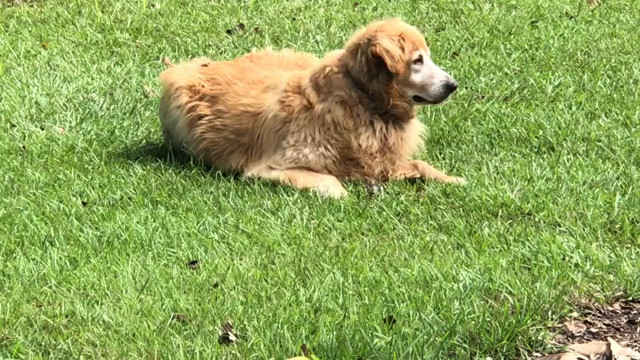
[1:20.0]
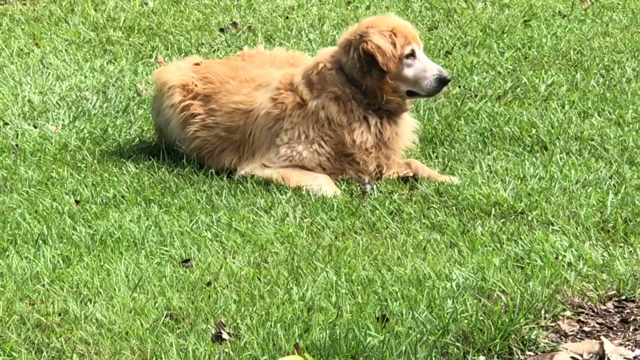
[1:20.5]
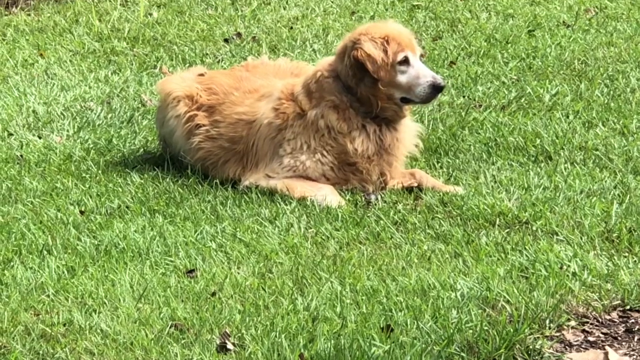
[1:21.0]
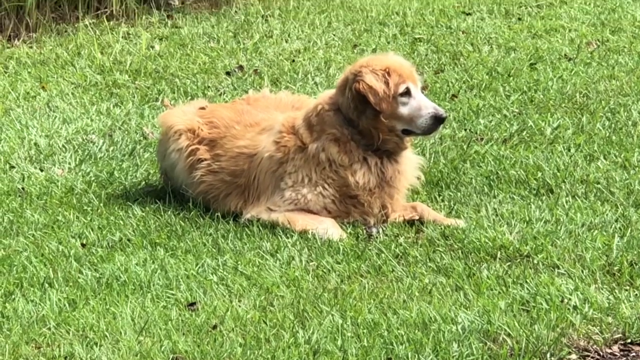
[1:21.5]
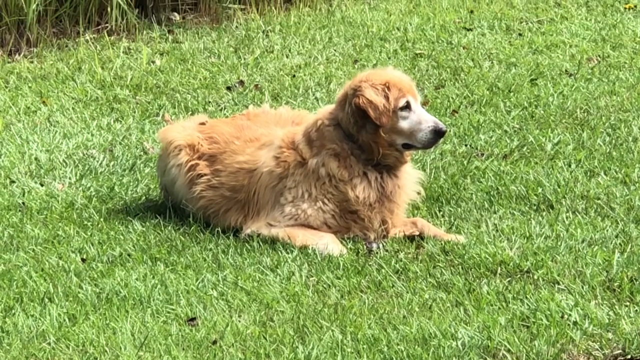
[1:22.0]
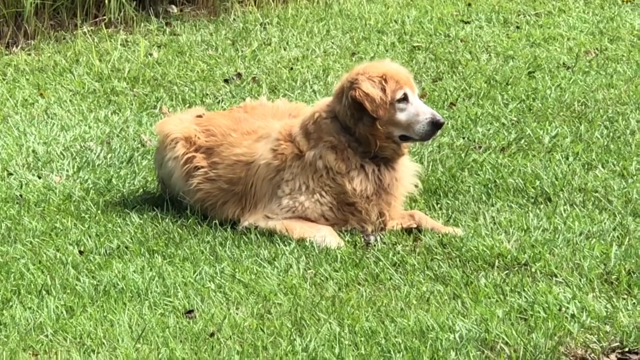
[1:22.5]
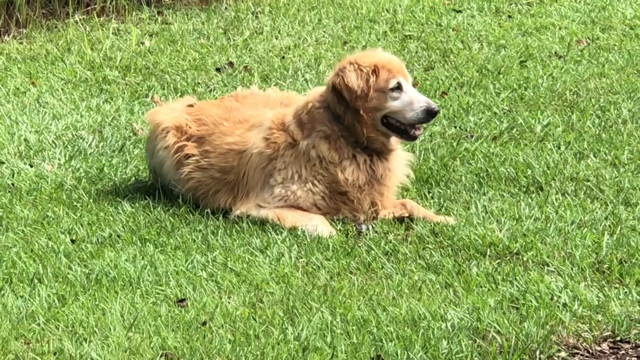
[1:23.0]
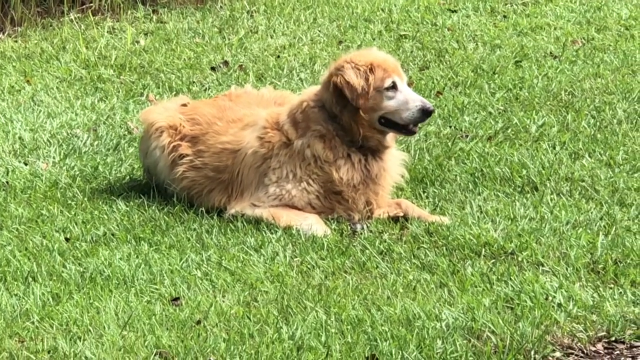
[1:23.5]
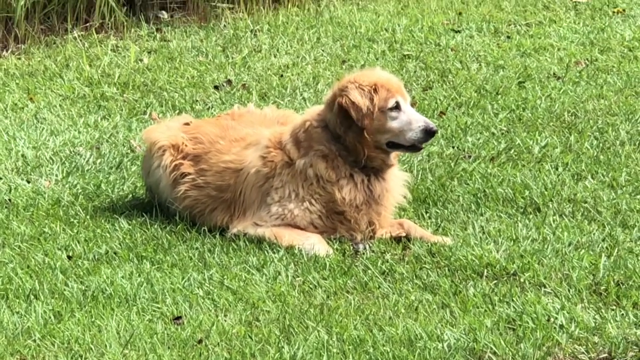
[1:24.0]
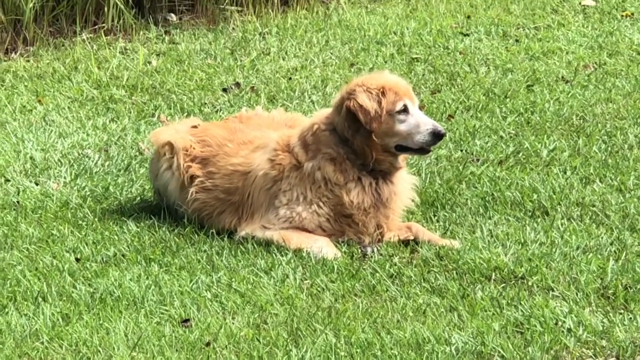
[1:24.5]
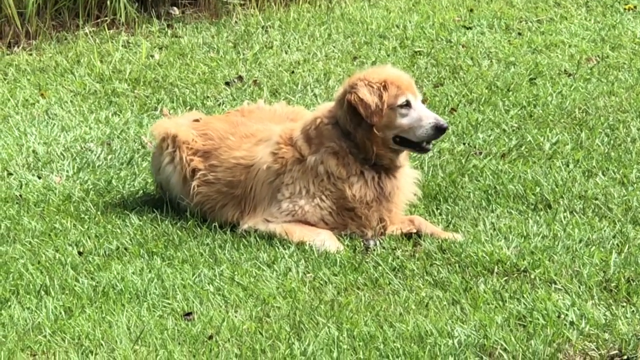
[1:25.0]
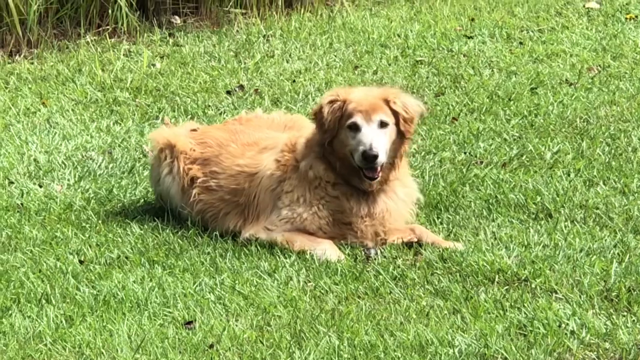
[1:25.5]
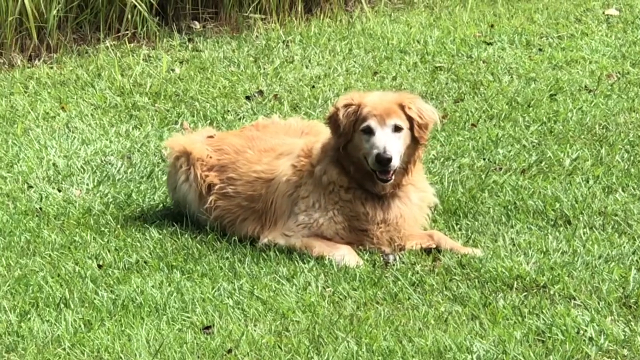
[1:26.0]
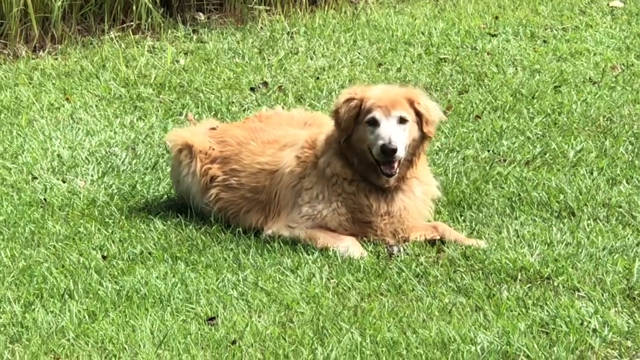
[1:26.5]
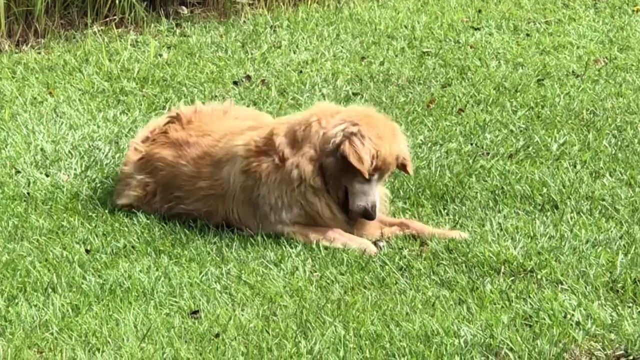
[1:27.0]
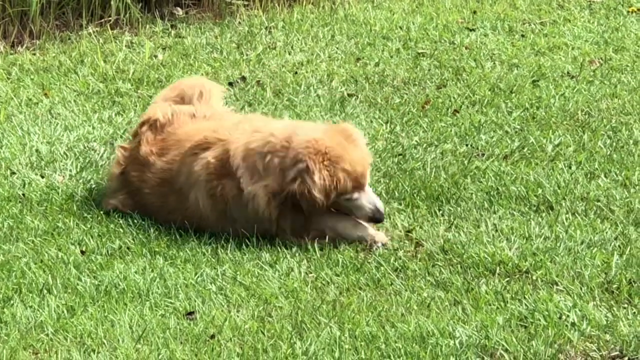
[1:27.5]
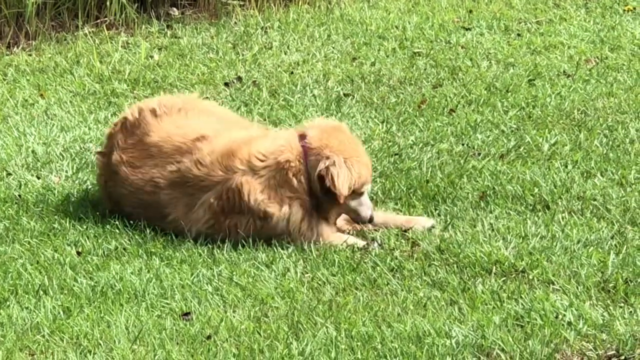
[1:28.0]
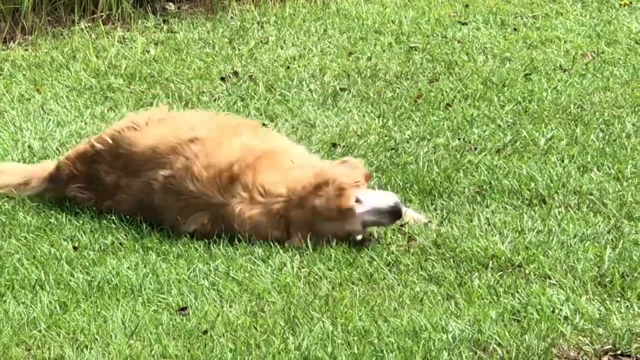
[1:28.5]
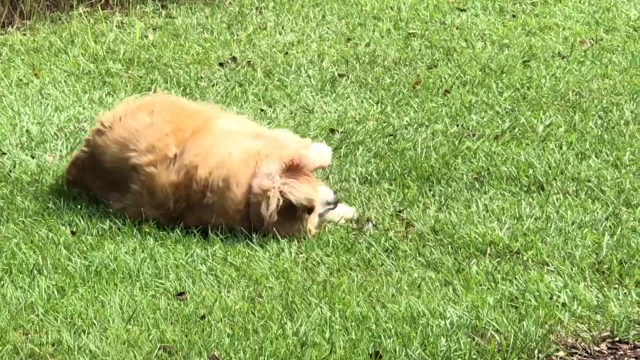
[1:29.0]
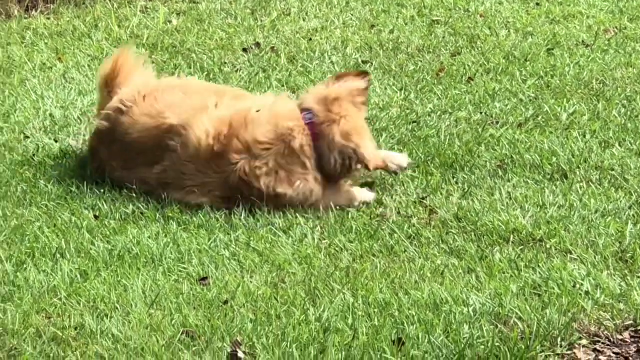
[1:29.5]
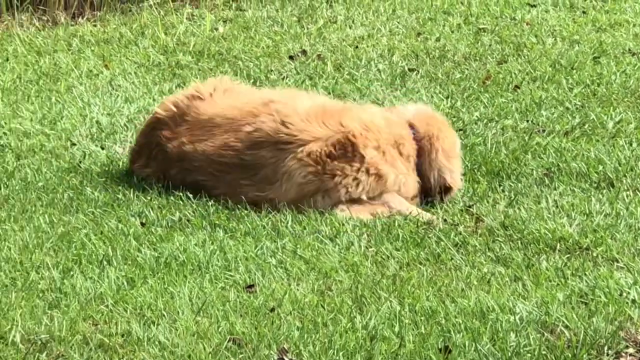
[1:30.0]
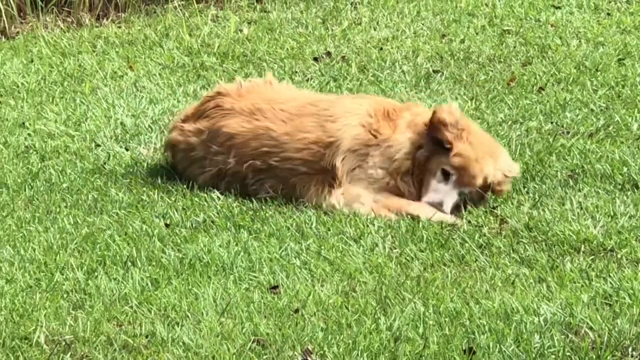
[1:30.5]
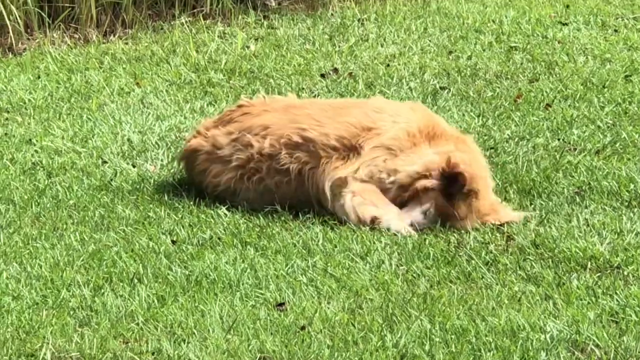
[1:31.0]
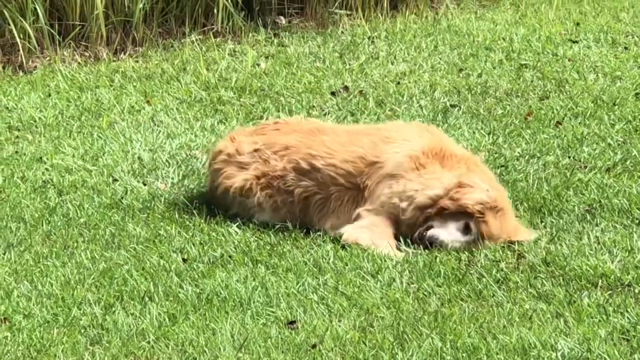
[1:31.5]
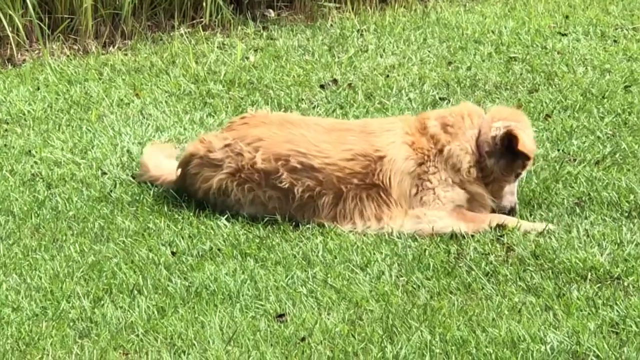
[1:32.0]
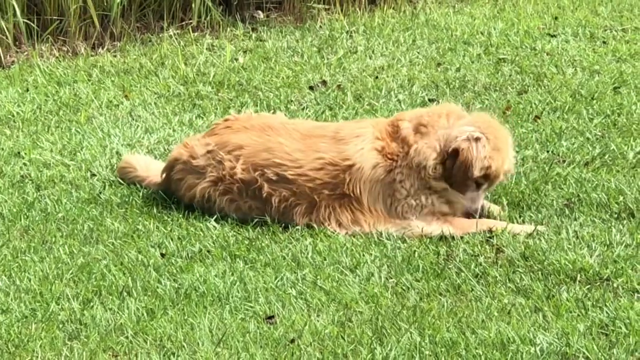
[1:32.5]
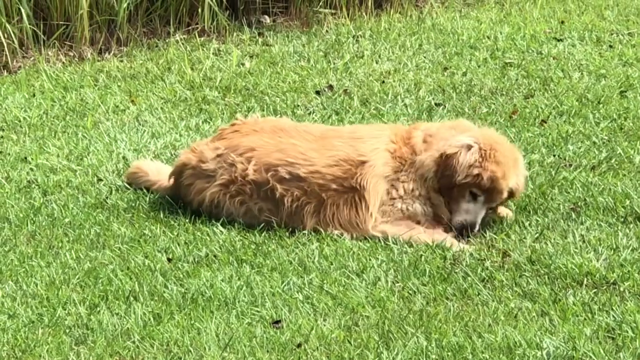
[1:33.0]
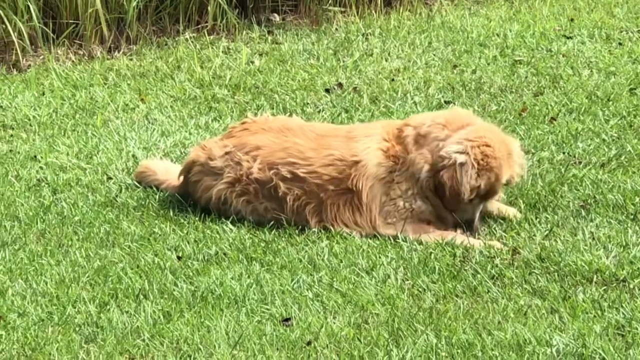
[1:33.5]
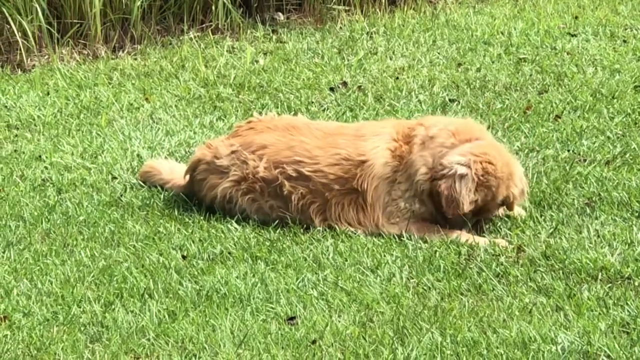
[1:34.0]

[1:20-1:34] The dog, possibly the pet of the person recording, is now lying on the ground in the fence, its head tilted toward nothing. It turns to the camera for a second before starting to bite and play on the ground, seemingly wanting to bite or do something with the thing between its teeth. Then it starts turning its body around the fence in a very playful, excited and energetic way. The video ends showing the dog on the ground.